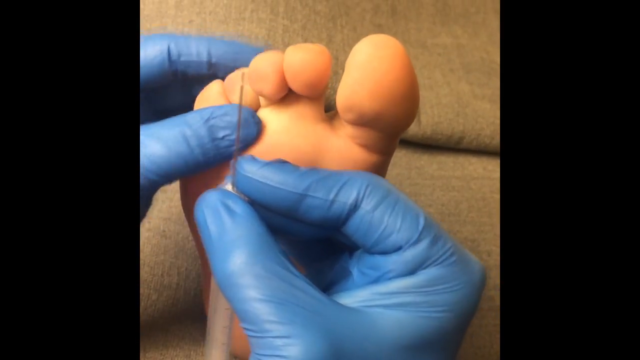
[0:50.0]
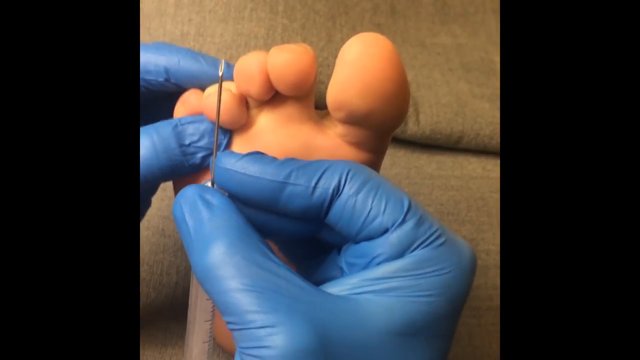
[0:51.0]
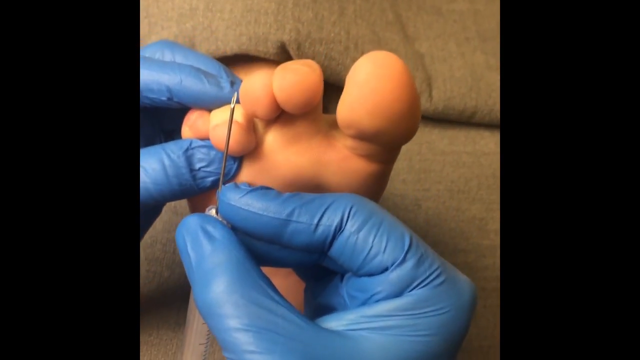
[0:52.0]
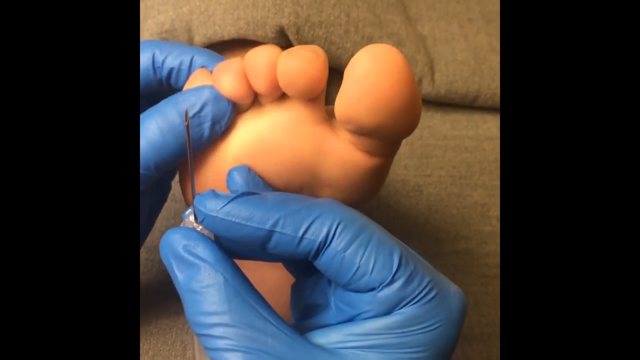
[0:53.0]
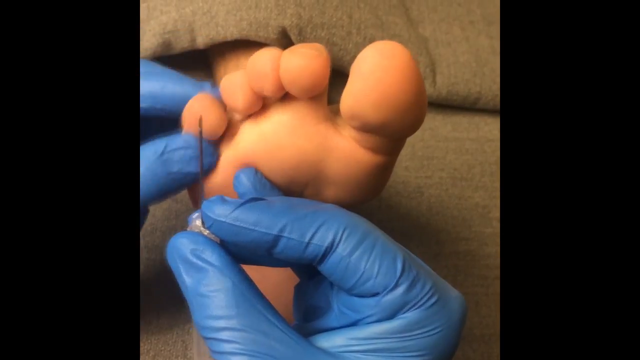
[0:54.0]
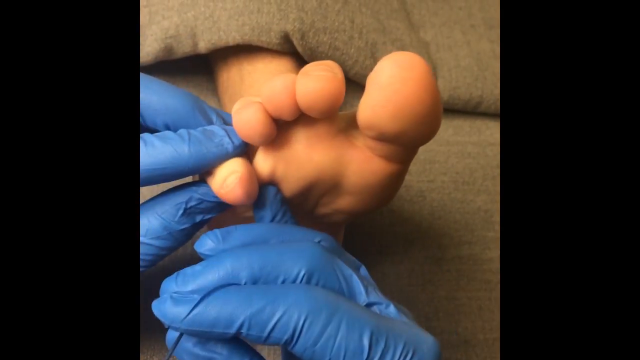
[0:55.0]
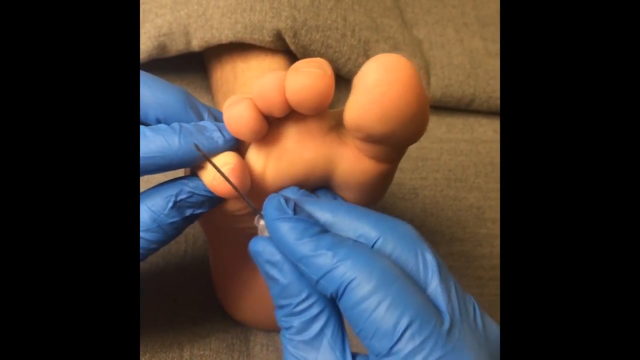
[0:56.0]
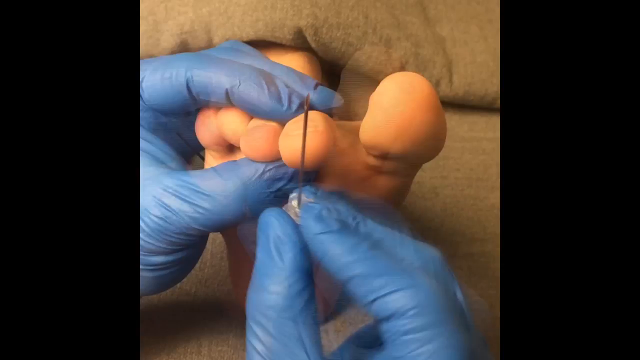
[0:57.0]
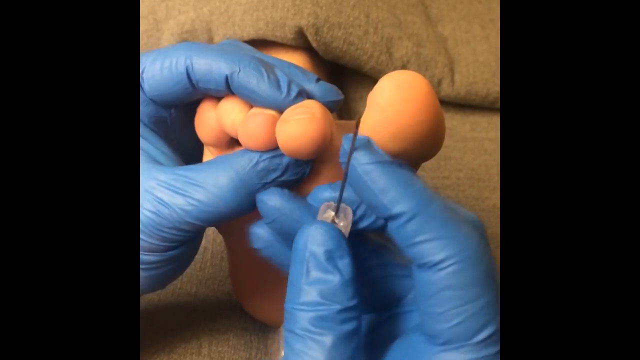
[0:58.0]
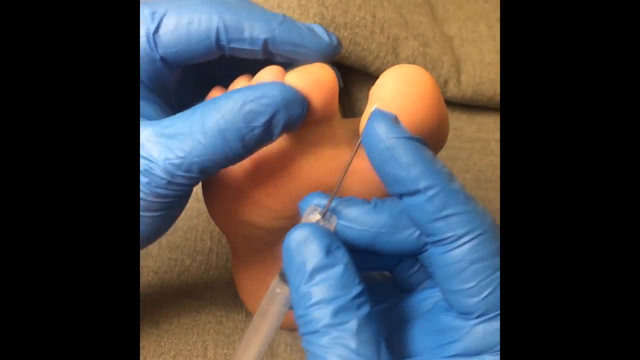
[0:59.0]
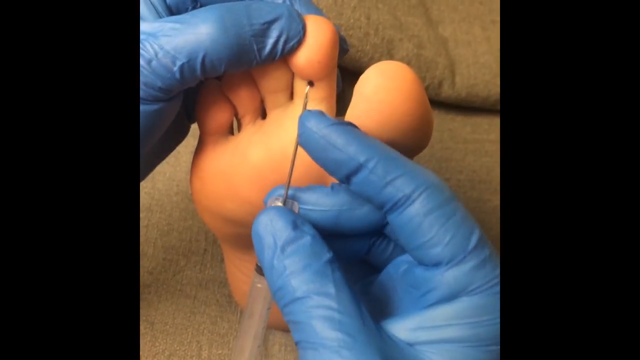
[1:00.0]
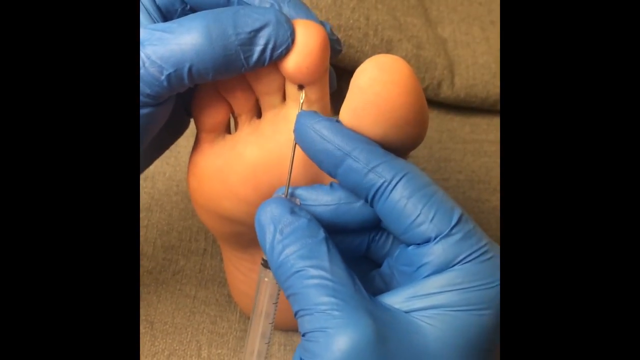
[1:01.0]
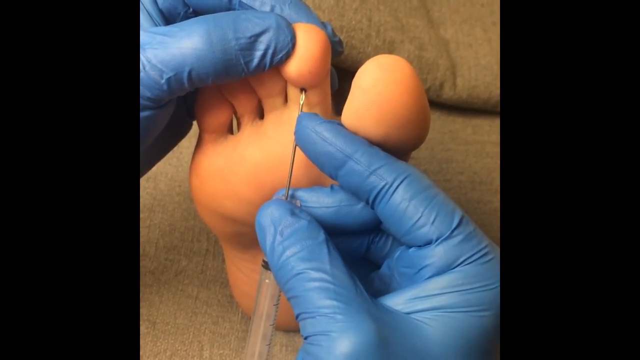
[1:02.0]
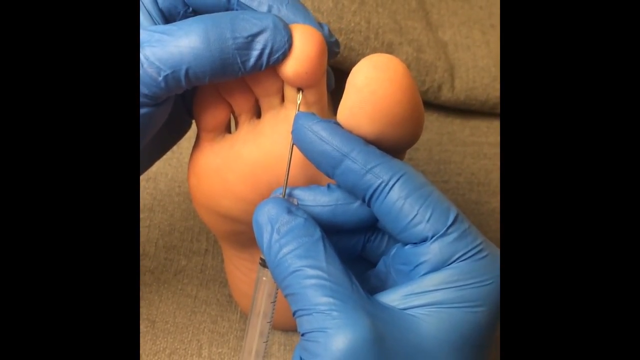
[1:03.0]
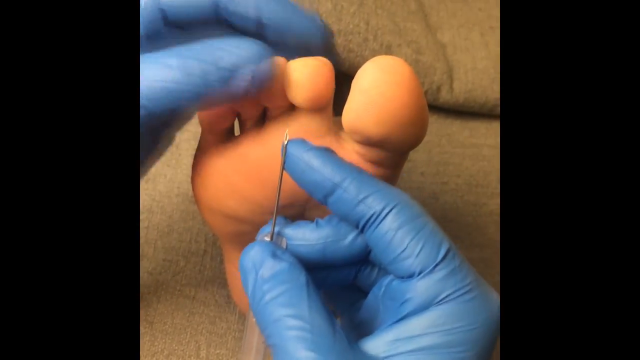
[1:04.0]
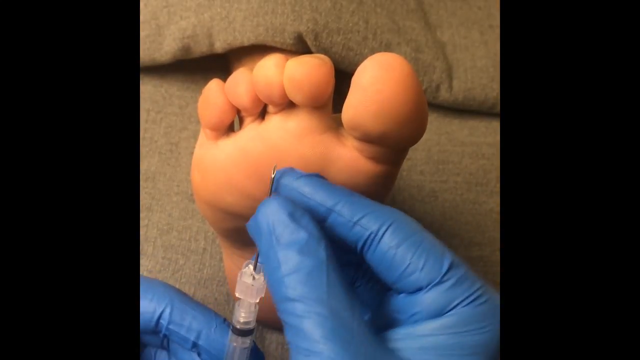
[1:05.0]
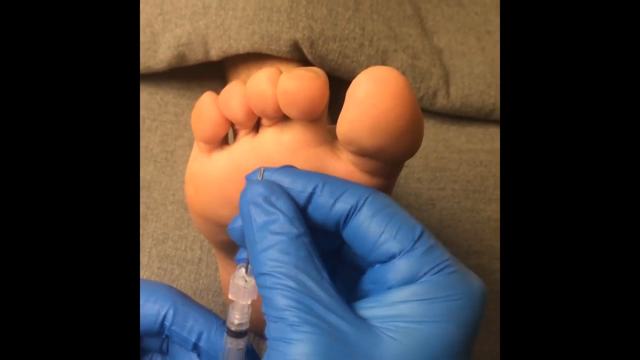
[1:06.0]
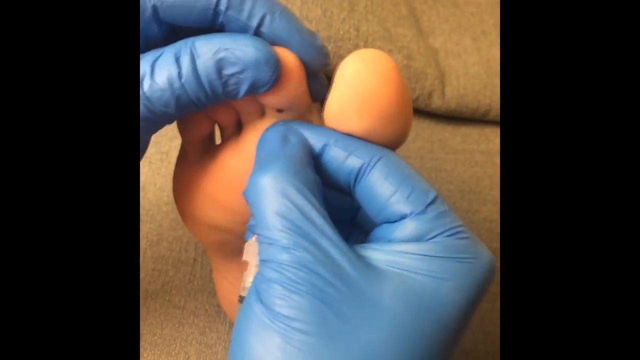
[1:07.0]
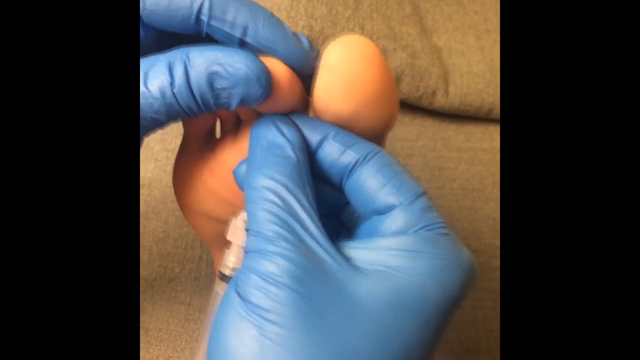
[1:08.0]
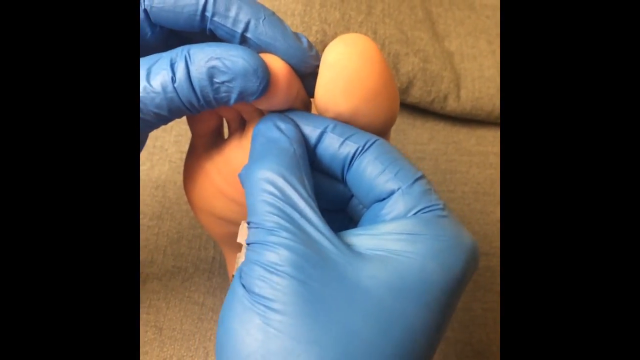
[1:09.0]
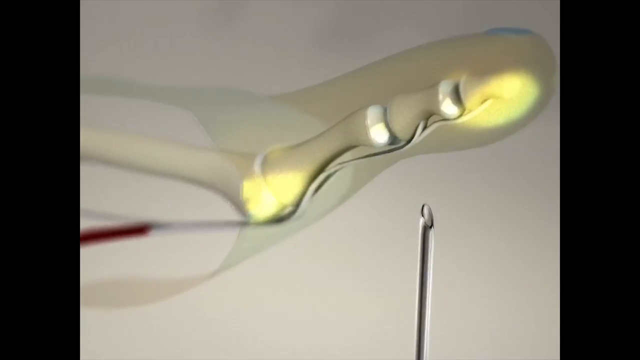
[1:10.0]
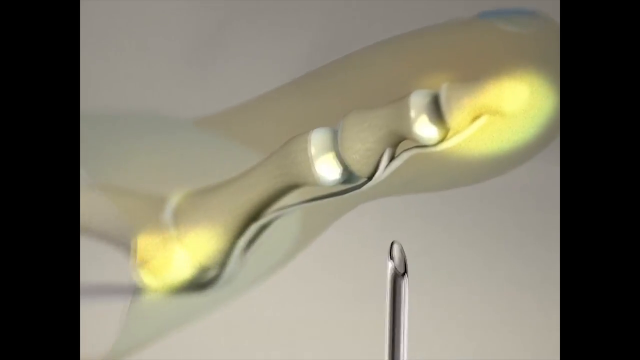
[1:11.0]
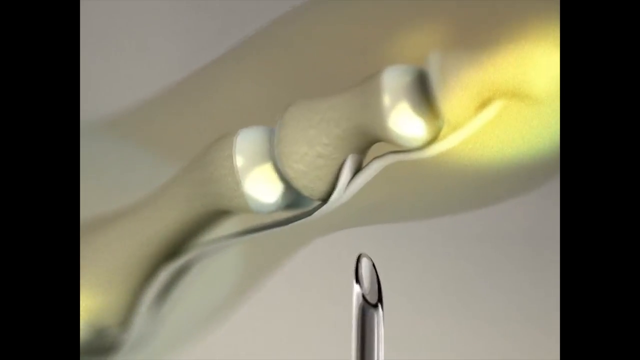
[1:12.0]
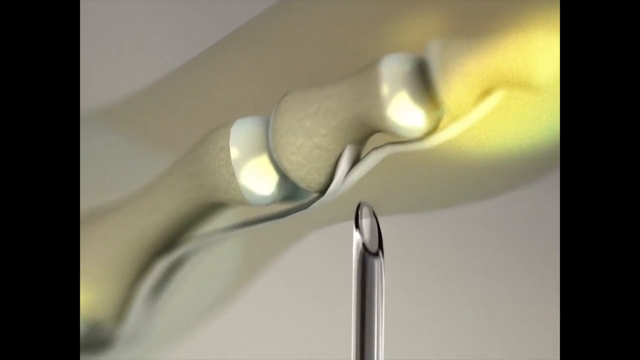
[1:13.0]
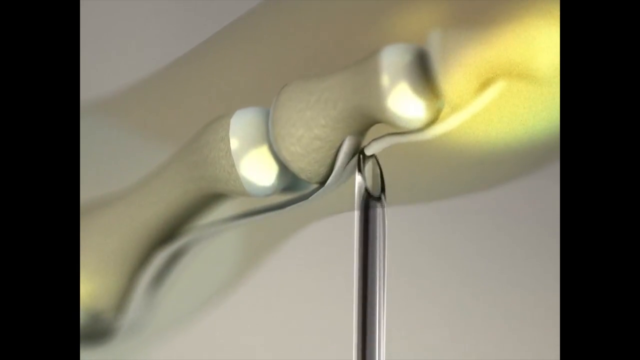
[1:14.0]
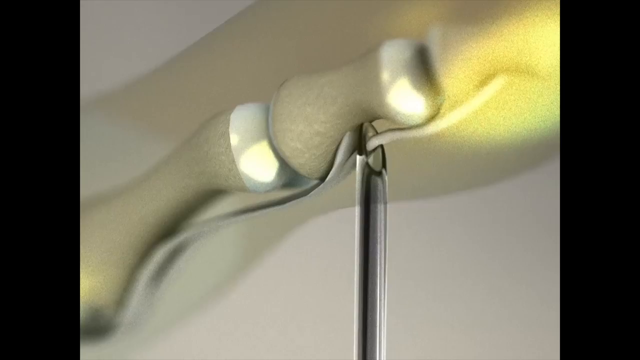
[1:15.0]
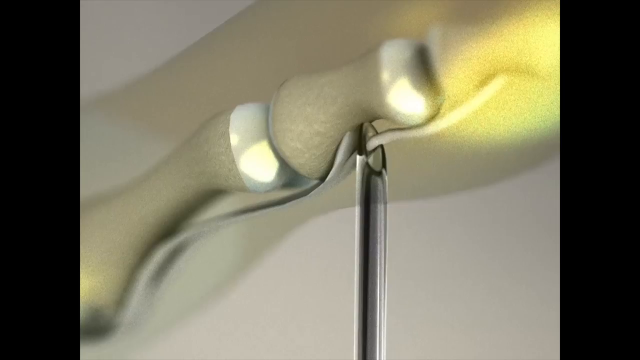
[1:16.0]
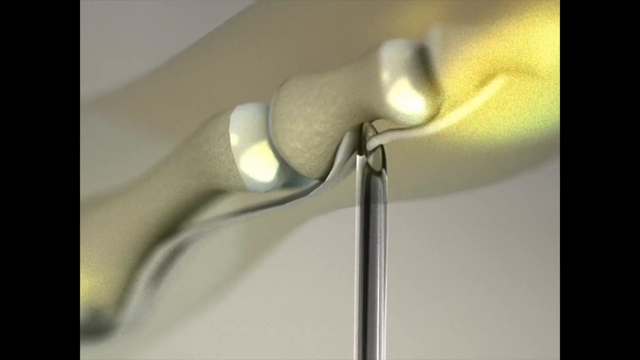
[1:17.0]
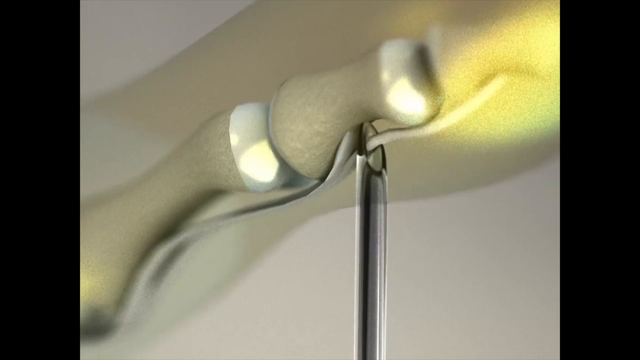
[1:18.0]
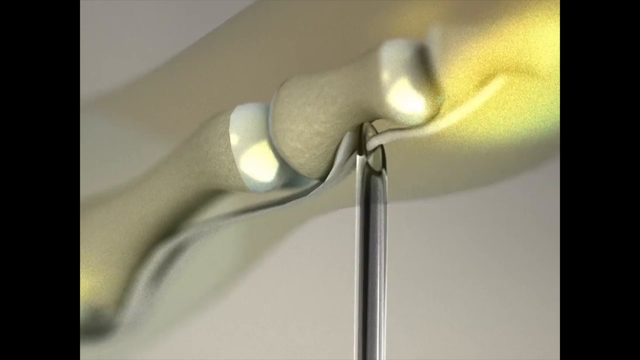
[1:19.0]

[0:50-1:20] The doctor moves the fourth toe back and forth and then the little toe back and forth. Next the doctor takes the second toe and puts the needle in right under the bottom part of the toe, where there looks to be a black circle or mark that the doctor uses as a reference point. The needle is poked up only a slight way. A close-up digital image then shows a hypodermic needle going through an anatomy-like, digital foot with some yellow spots at the tip of the toe, the needle going a short way in near a joint in the toe. The very close-up image is grayish in color and highlights the needle going into the toe.